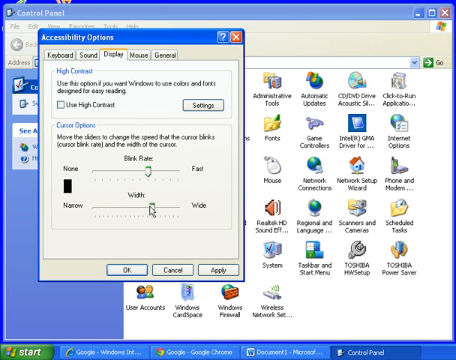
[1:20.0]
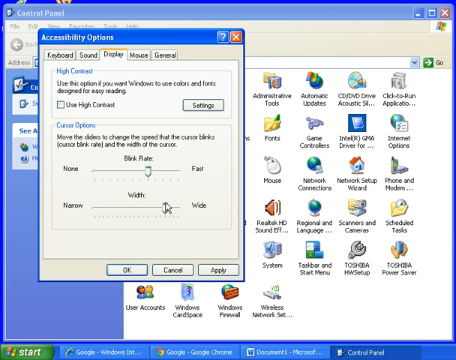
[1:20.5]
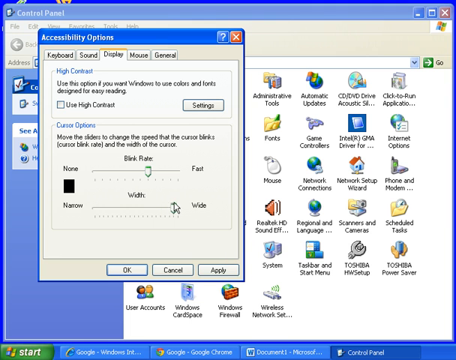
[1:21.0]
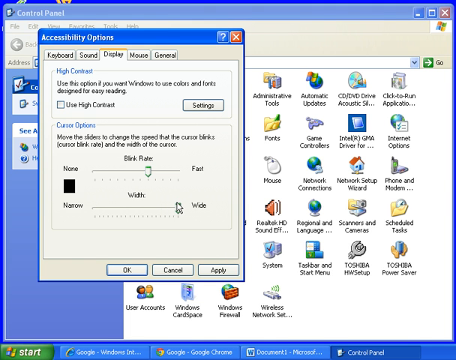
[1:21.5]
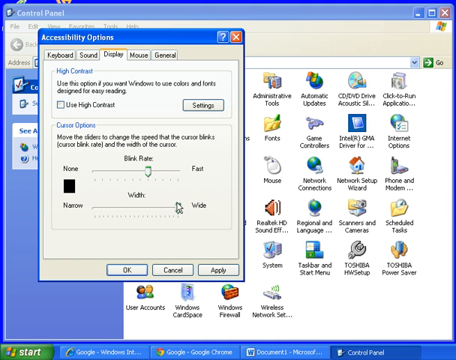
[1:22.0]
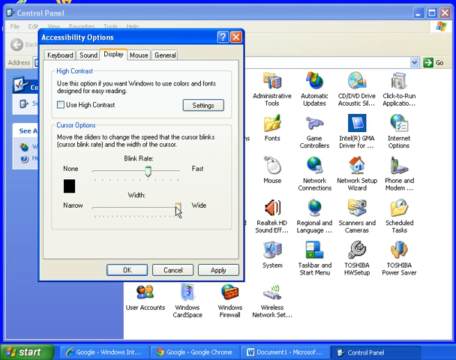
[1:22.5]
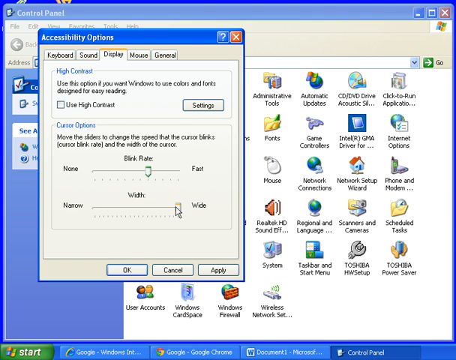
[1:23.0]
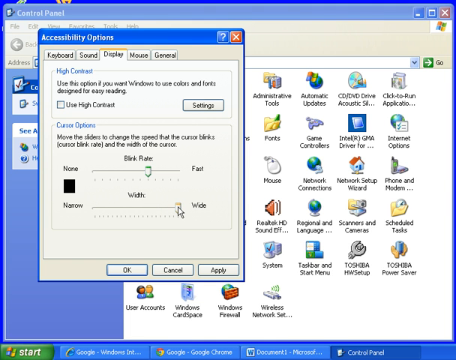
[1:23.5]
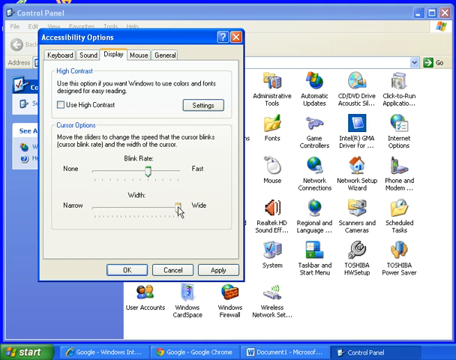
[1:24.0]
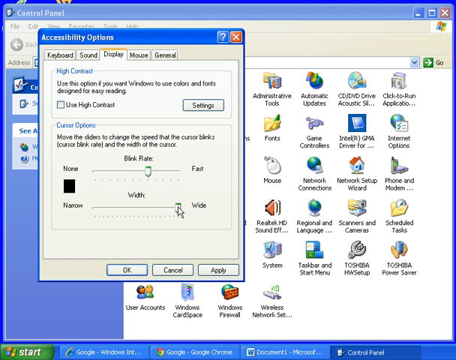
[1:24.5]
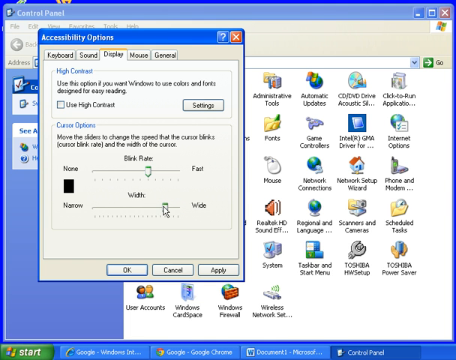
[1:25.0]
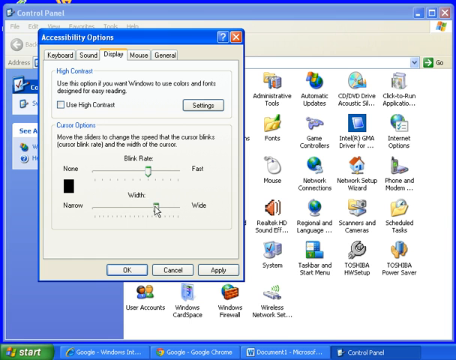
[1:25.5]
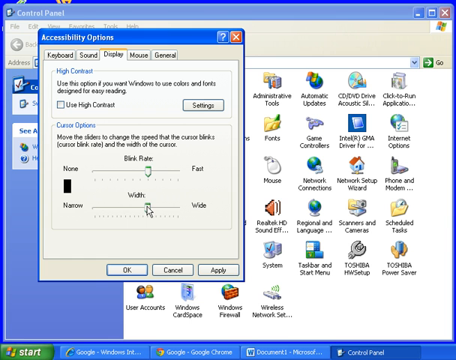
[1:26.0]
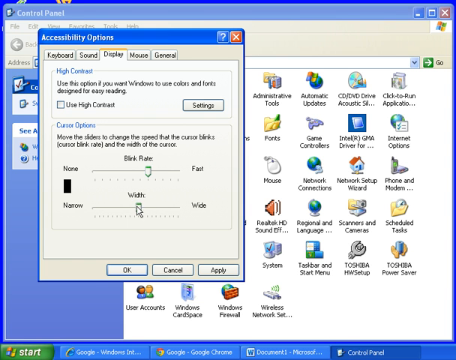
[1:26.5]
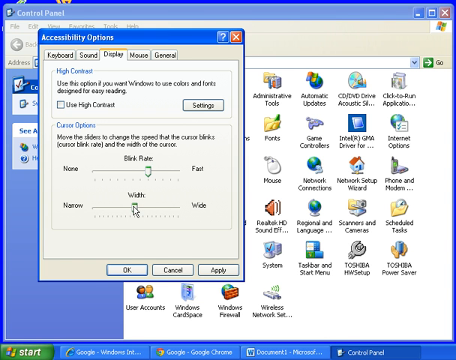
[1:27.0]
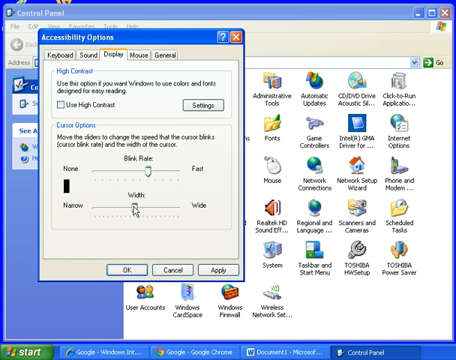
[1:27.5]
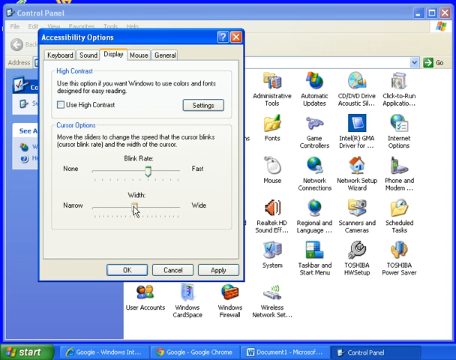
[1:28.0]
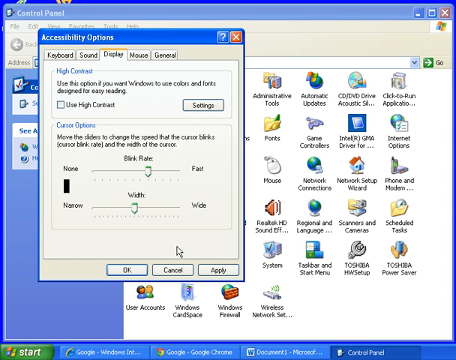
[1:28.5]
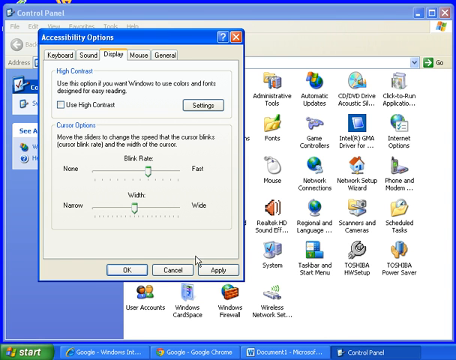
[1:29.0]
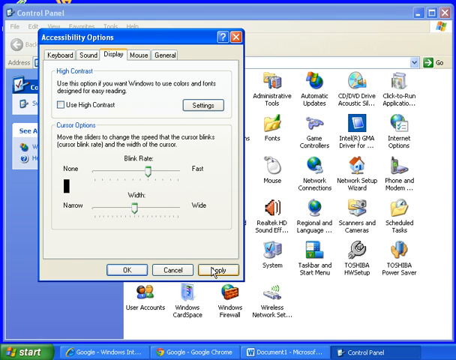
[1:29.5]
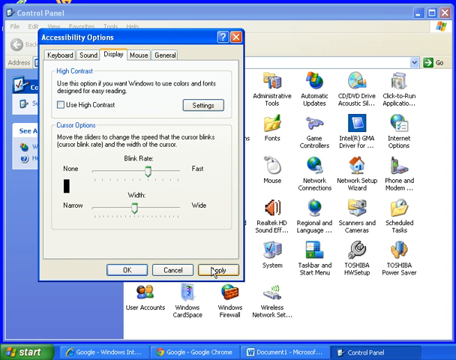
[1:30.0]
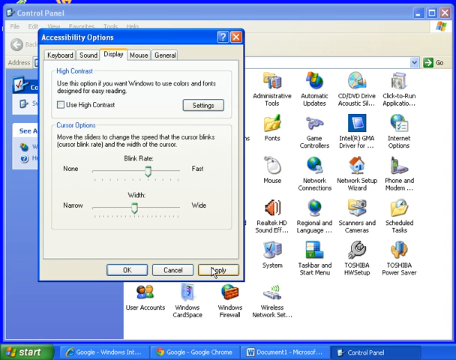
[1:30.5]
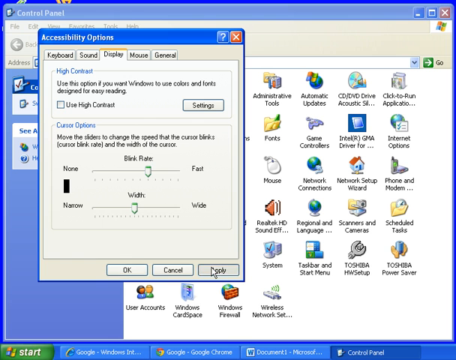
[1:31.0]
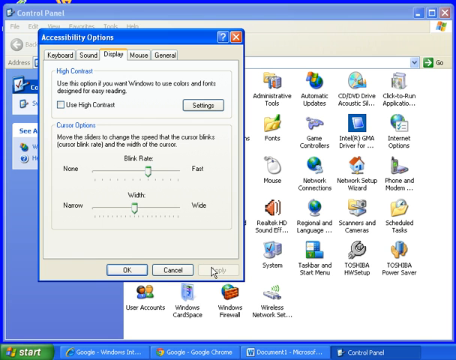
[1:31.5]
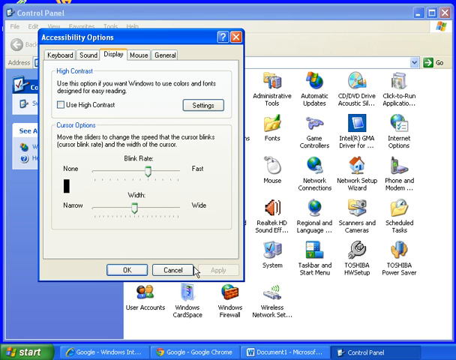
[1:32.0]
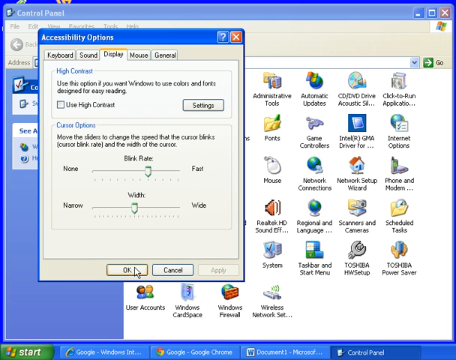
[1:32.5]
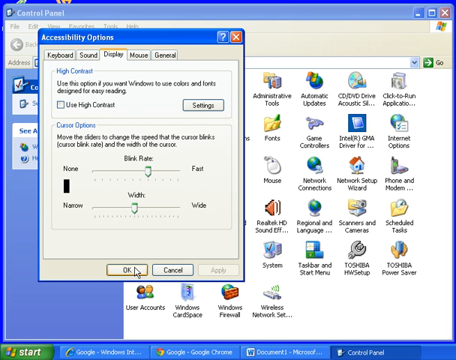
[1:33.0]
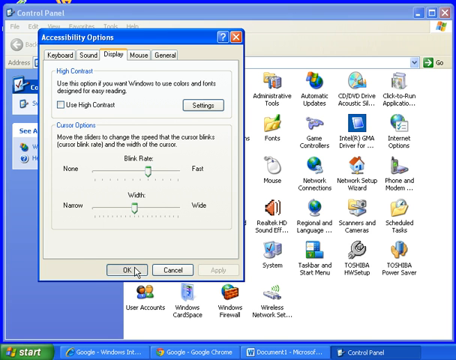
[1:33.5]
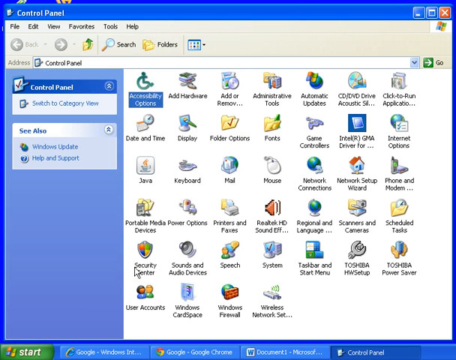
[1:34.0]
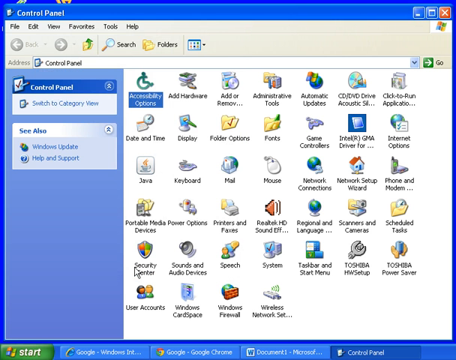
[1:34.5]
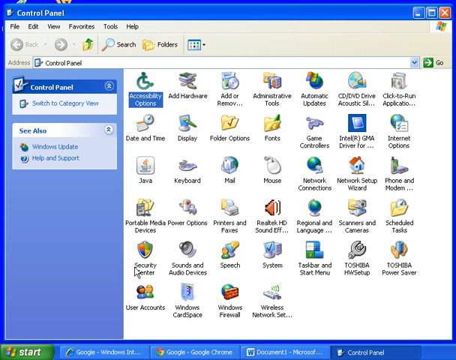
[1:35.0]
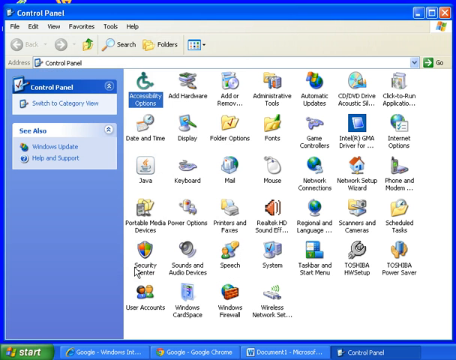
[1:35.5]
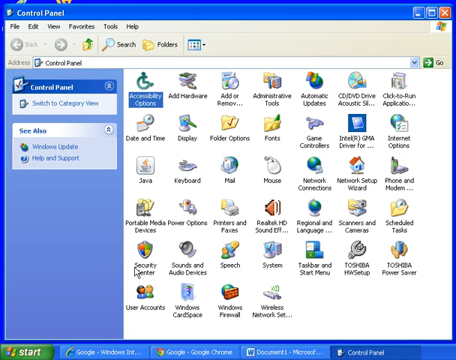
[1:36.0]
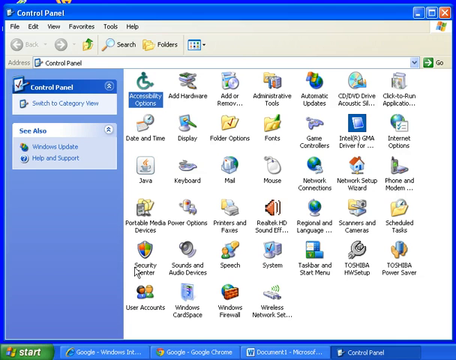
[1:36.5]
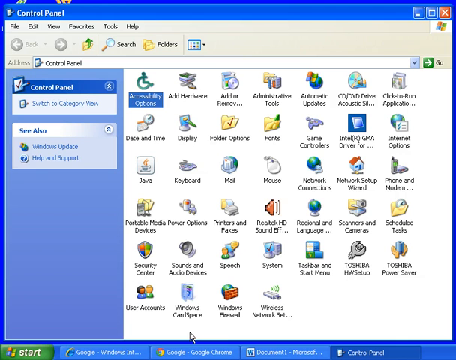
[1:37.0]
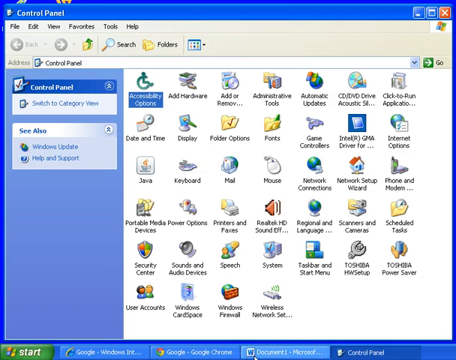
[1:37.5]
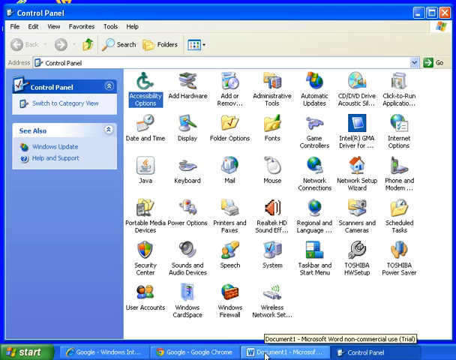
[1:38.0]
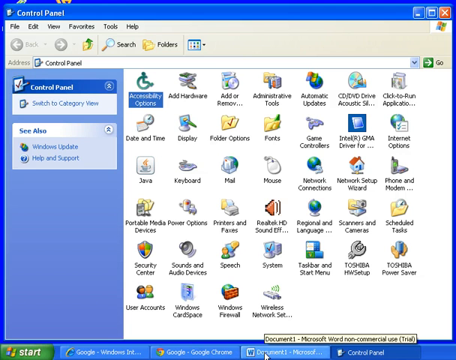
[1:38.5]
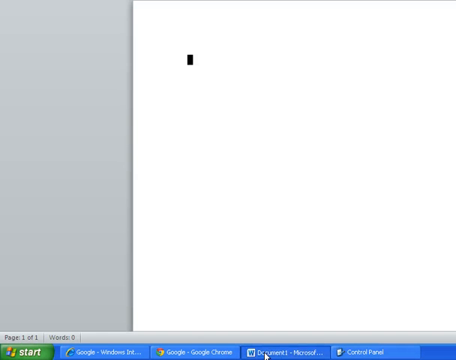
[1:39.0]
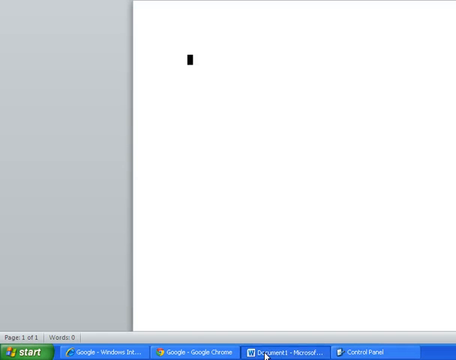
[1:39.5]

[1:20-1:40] The control panel is open, and the user has chosen accessibility options and is on the display tab. It says "high contrast" and "use this option if you want Windows to use colors and fonts designed for easy reading", and then "cursor options" with "move the sliders to change the speed of the cursor blinks", cursor blink rate and the width of the cursor. The user moves the width slider all the way from narrow to wide, then moves it back to the middle, clicks apply and then OK. The screen returns to the control panel page.